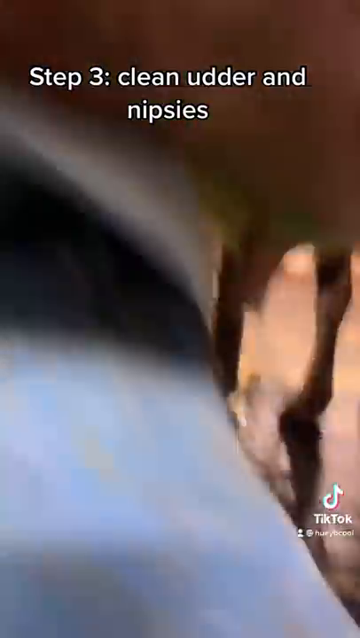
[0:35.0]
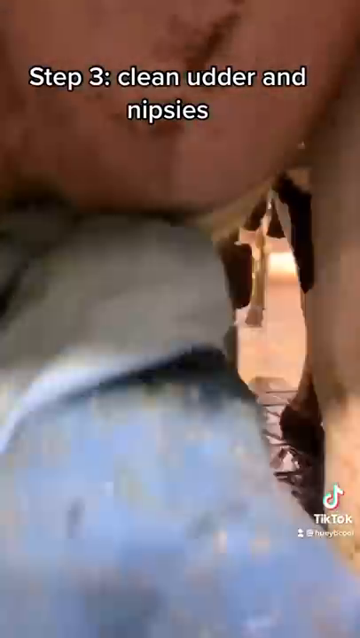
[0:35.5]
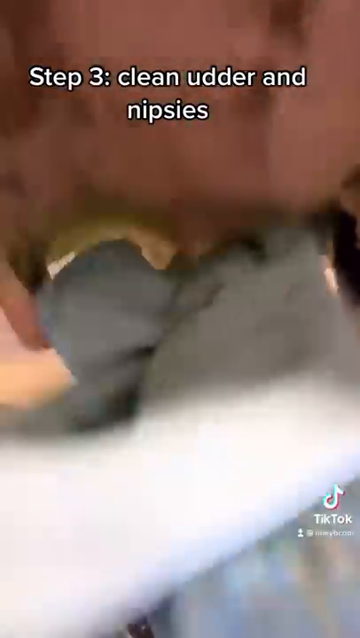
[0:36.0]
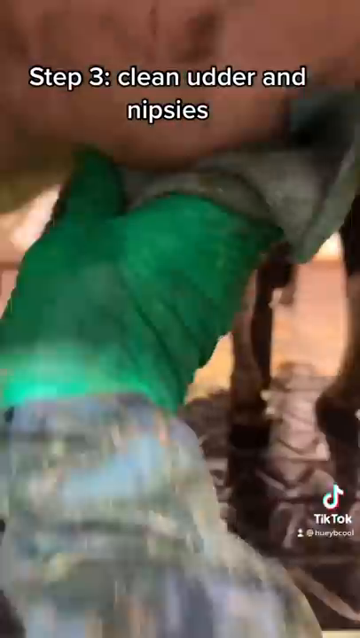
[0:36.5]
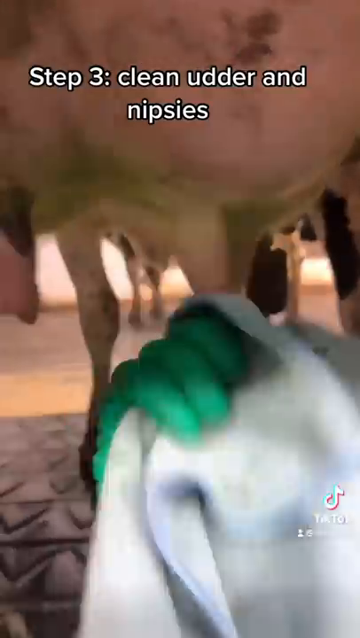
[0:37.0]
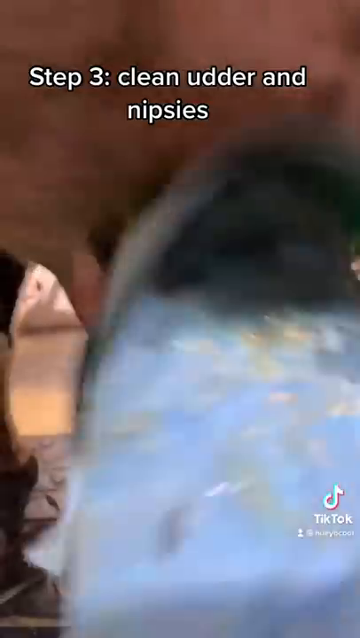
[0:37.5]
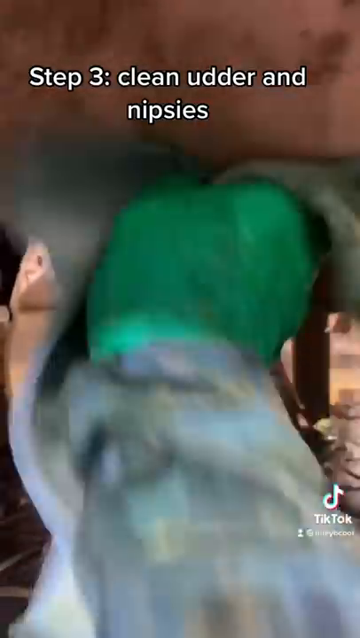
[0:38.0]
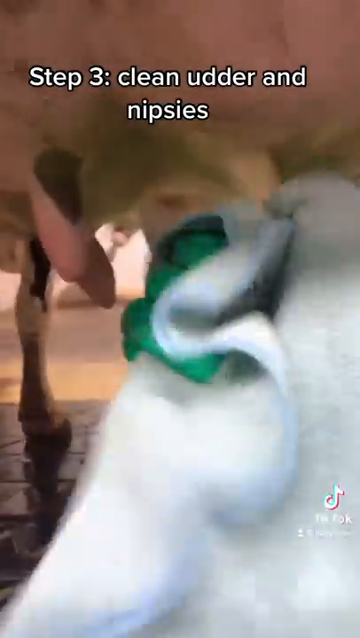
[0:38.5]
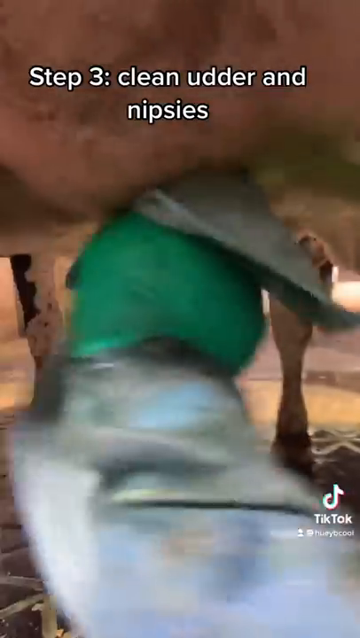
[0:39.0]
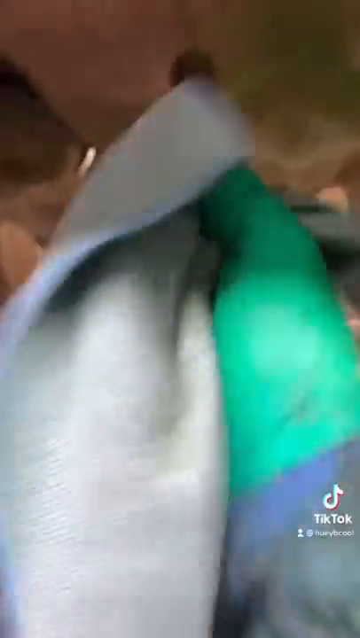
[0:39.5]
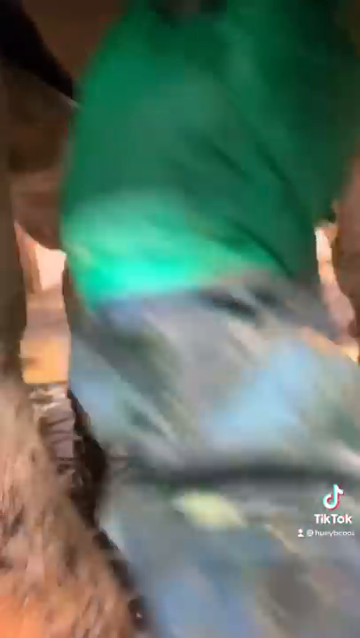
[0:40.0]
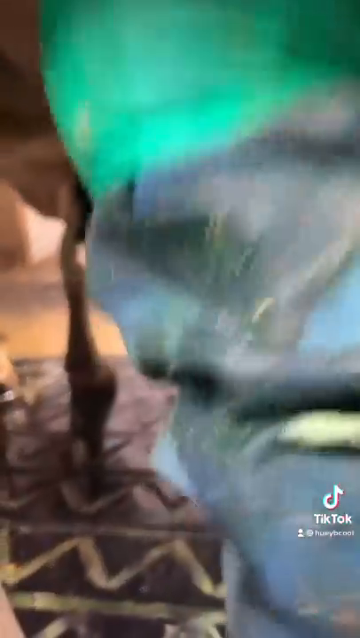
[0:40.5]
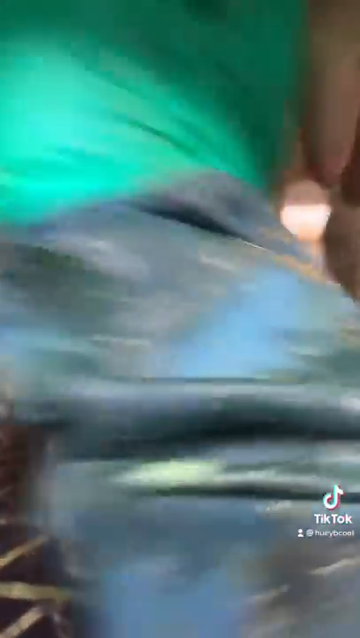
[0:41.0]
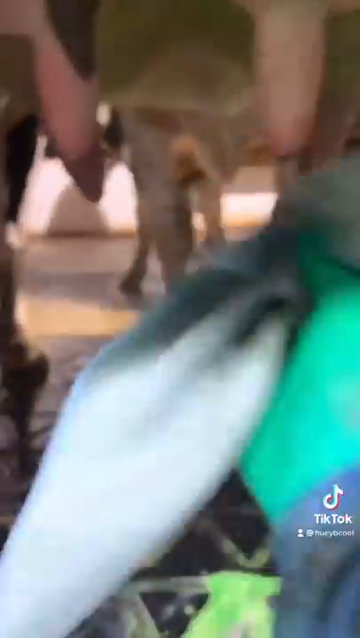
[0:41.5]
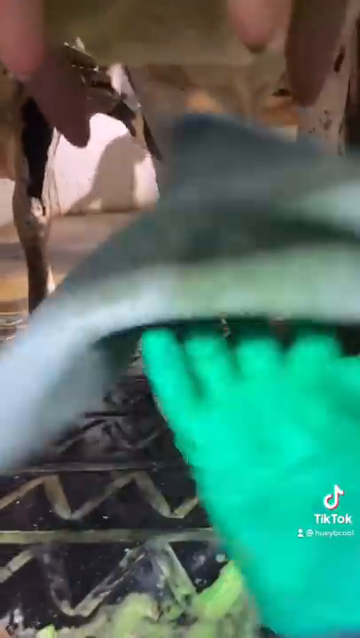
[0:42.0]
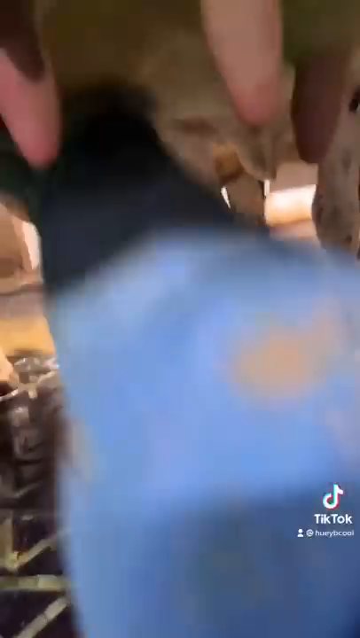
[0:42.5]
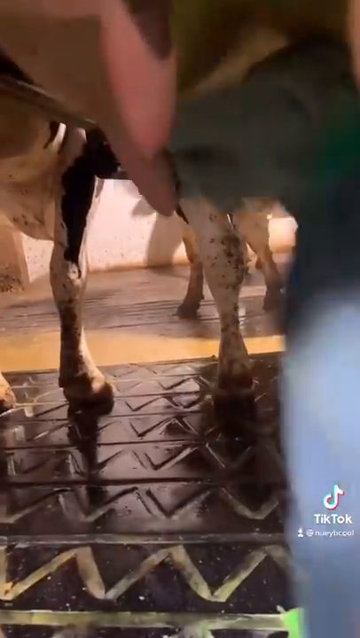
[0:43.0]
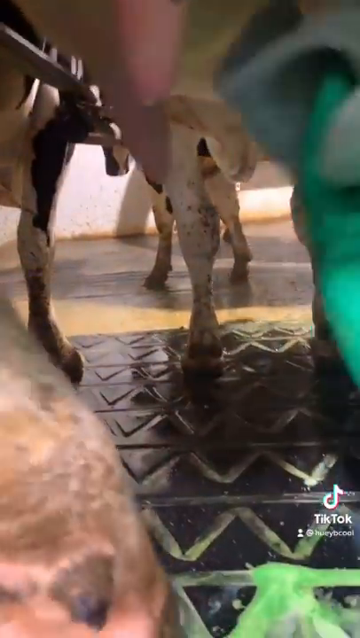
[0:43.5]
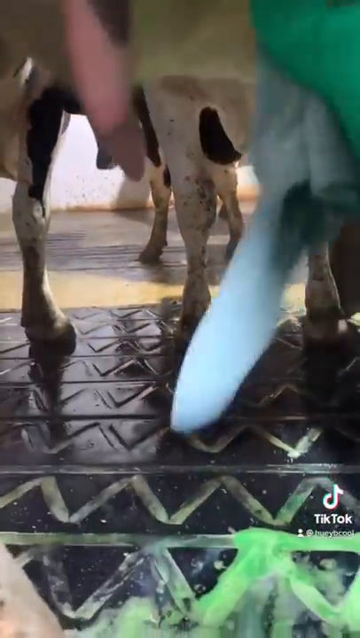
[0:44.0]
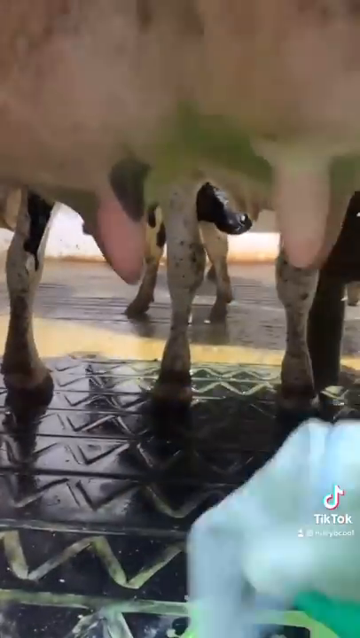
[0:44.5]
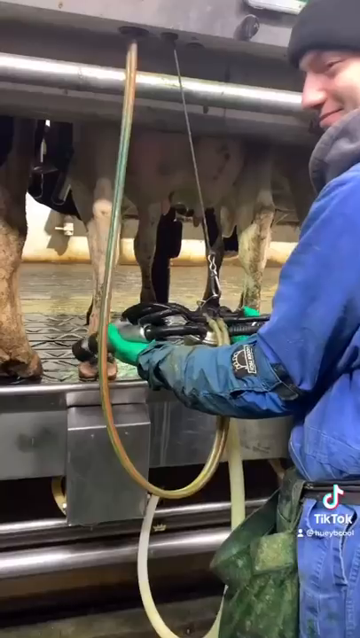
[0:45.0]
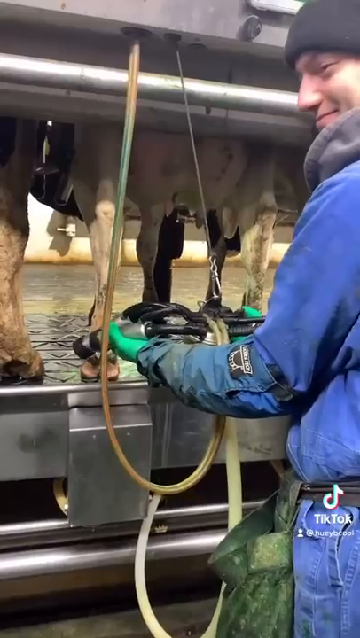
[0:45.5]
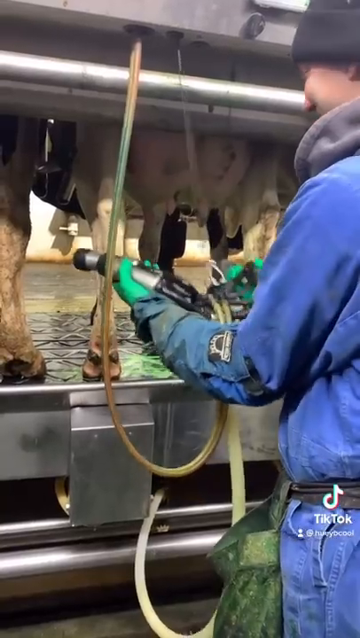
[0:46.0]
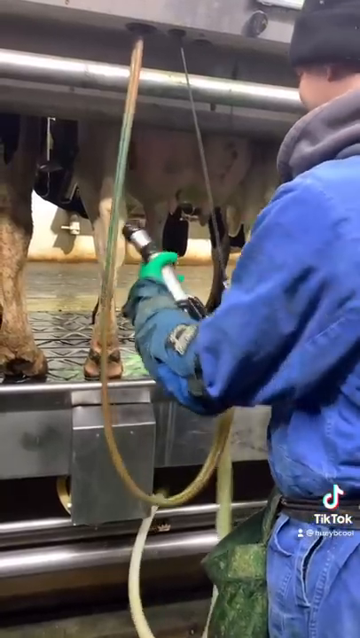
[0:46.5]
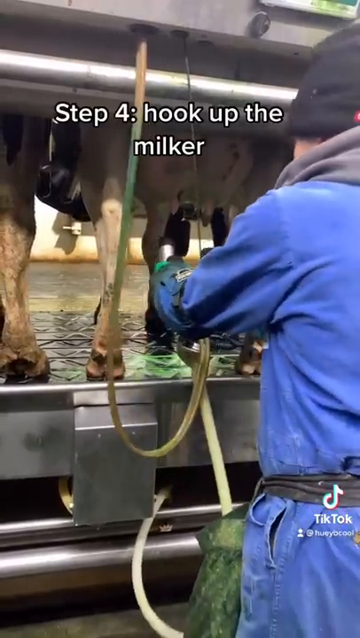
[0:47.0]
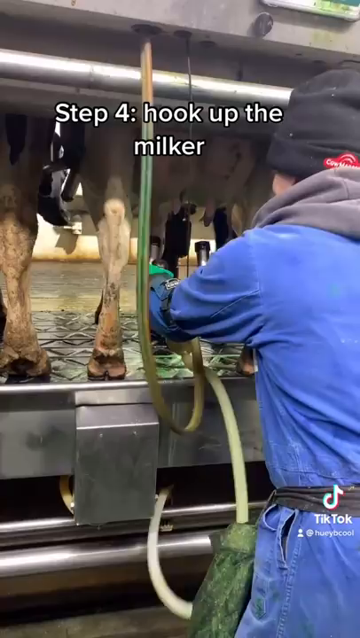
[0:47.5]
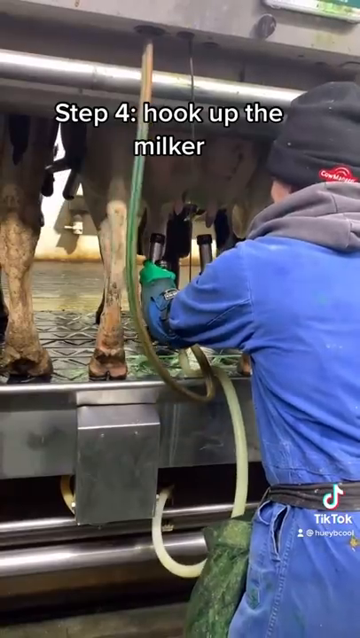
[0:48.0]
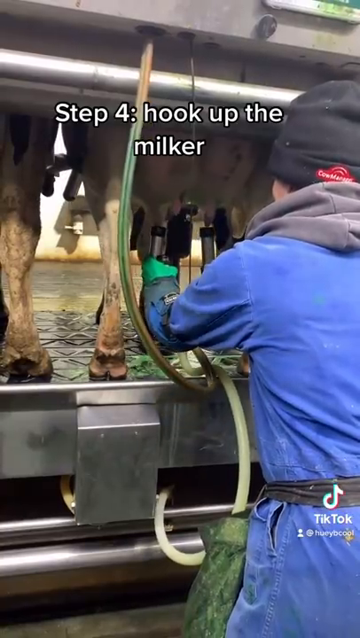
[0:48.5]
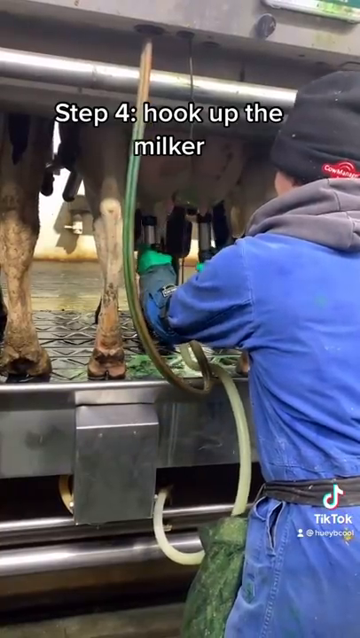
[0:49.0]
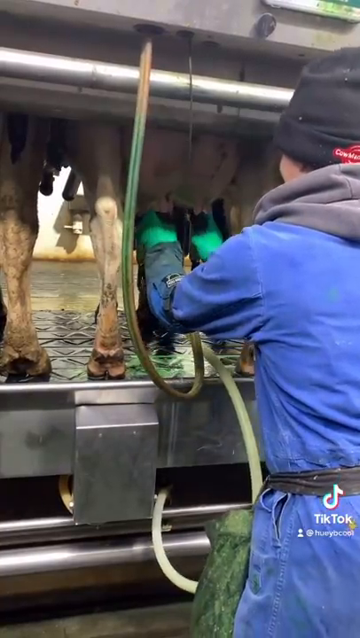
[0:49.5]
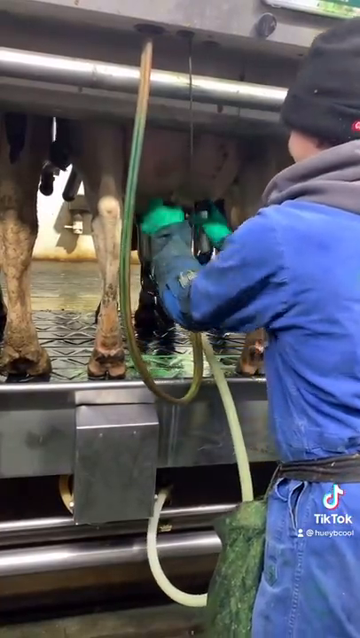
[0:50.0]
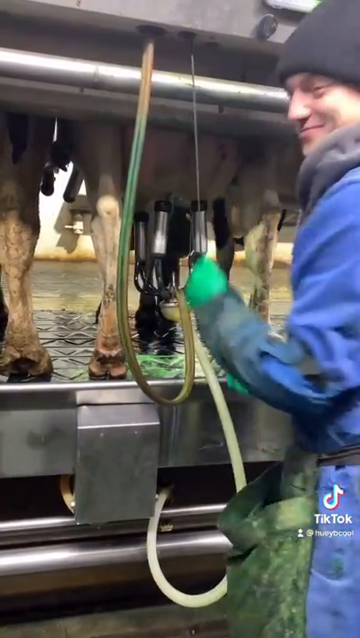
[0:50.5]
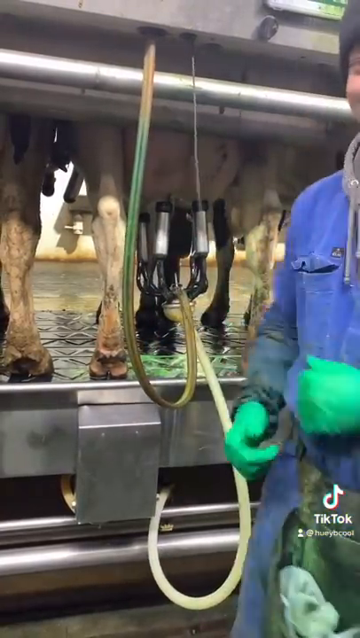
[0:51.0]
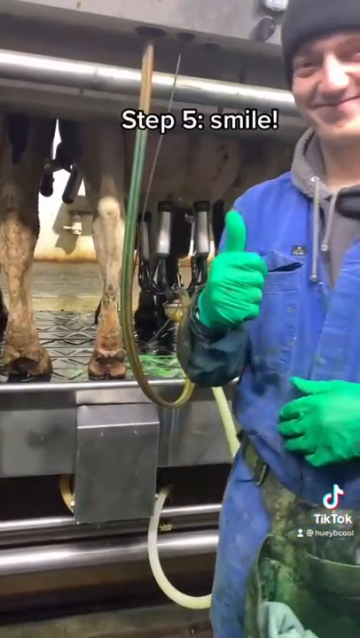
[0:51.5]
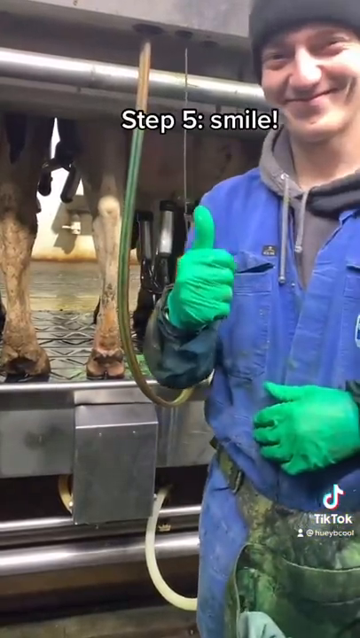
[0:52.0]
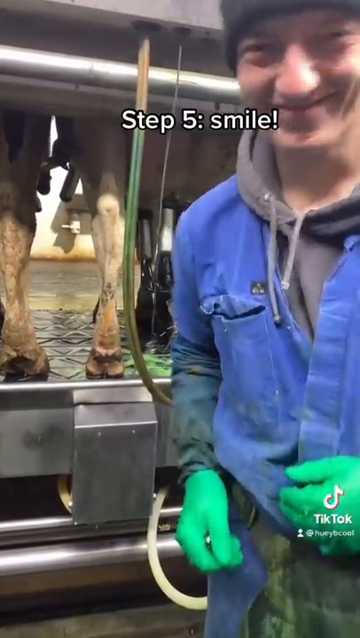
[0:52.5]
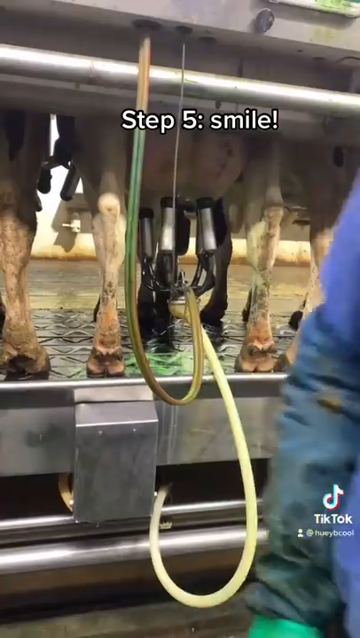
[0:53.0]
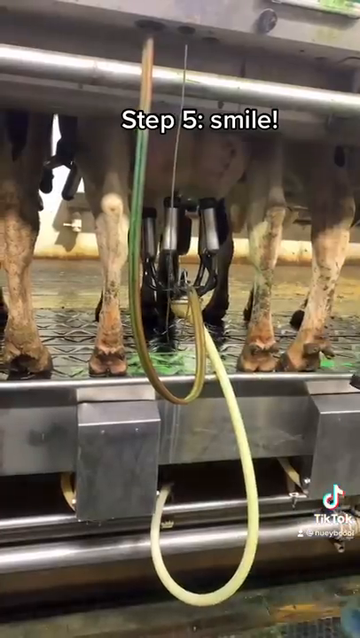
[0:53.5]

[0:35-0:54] Milk is collected from the cow with an electric machine that collects milk automatically. The person works with the machine, whose mechanical part works like a vacuum.